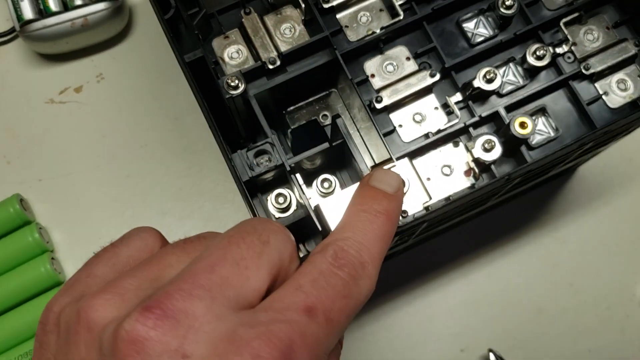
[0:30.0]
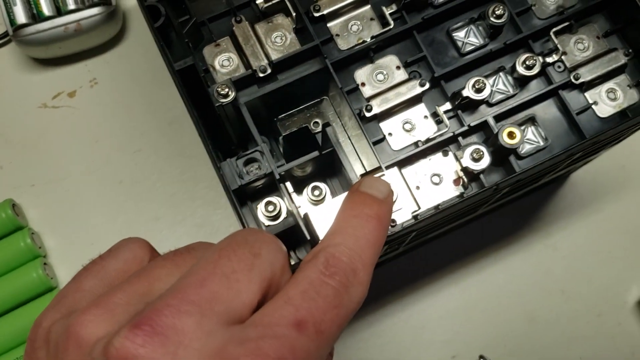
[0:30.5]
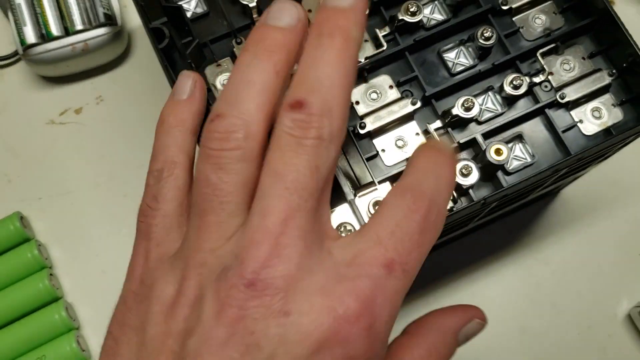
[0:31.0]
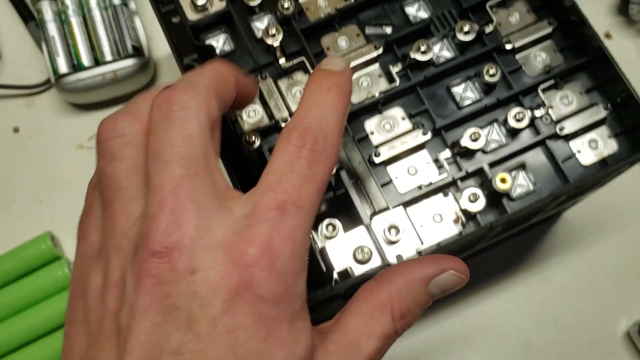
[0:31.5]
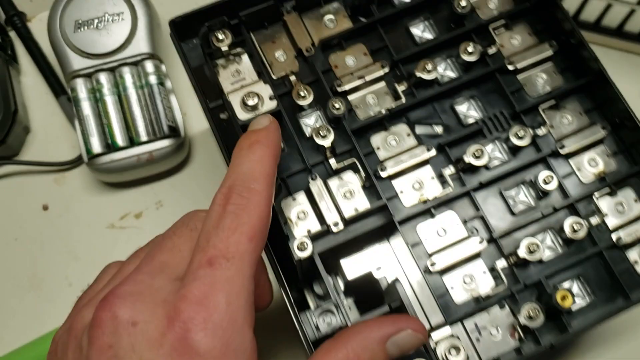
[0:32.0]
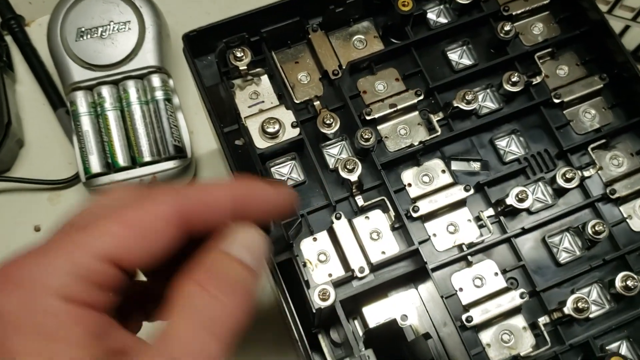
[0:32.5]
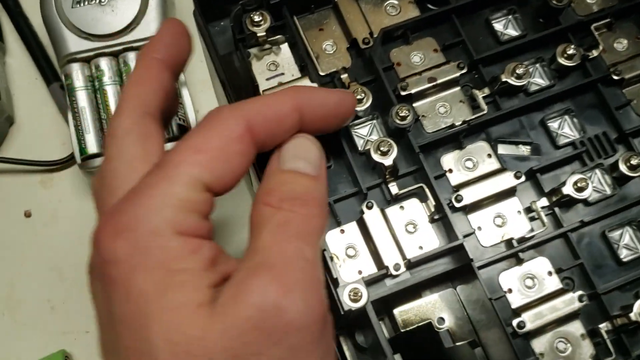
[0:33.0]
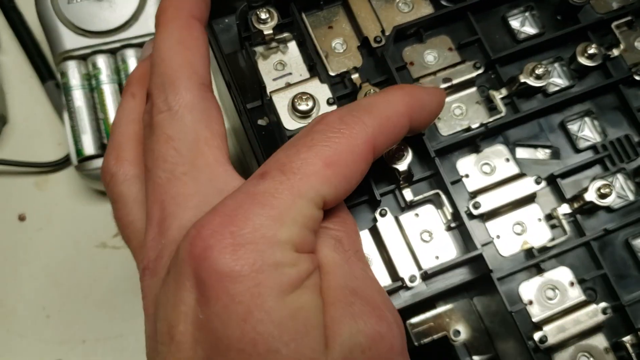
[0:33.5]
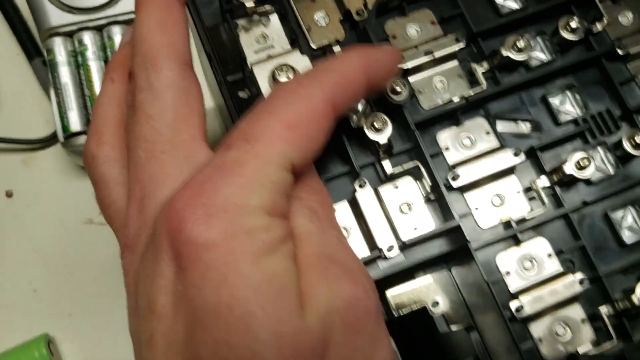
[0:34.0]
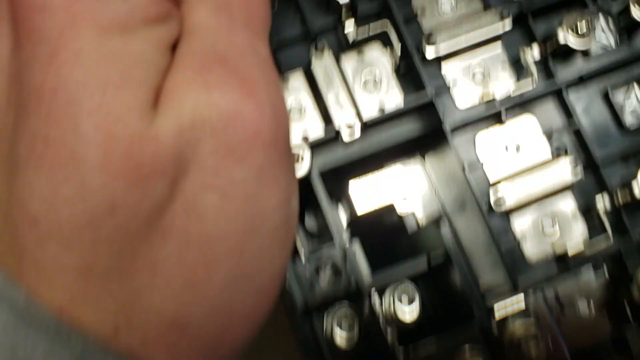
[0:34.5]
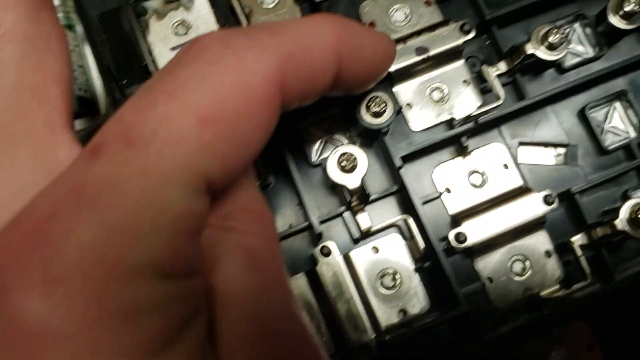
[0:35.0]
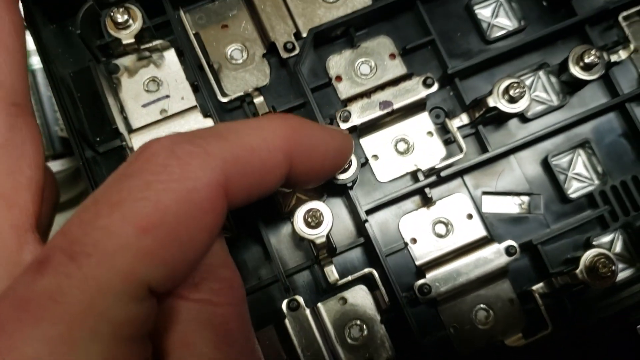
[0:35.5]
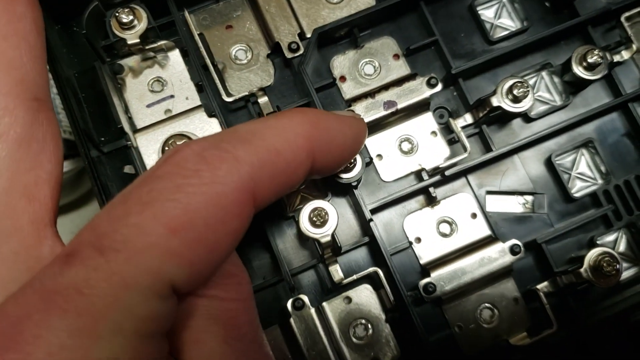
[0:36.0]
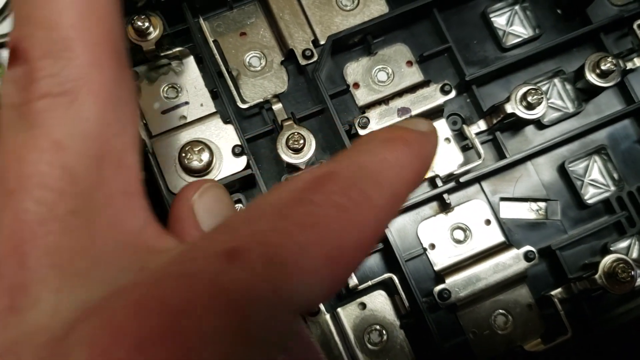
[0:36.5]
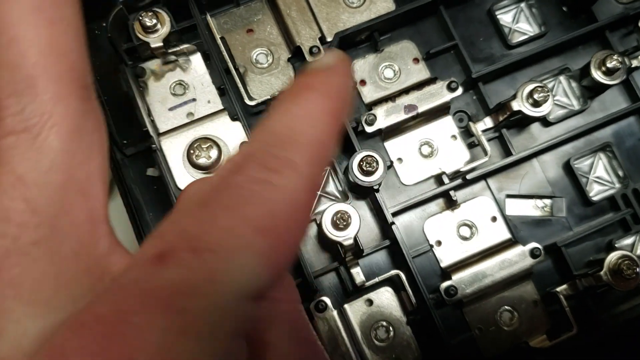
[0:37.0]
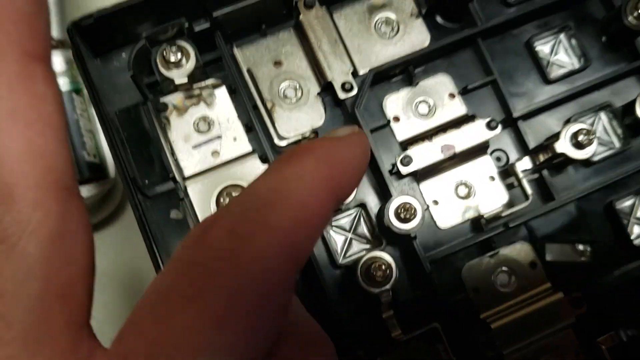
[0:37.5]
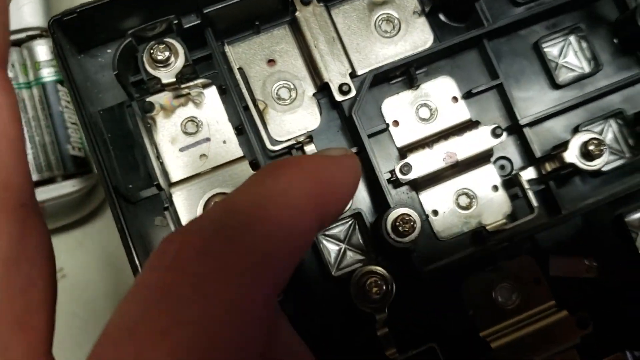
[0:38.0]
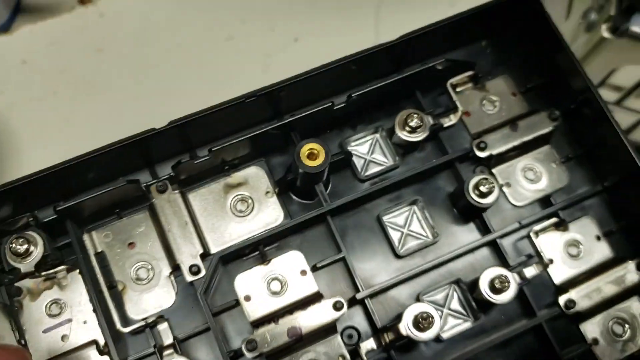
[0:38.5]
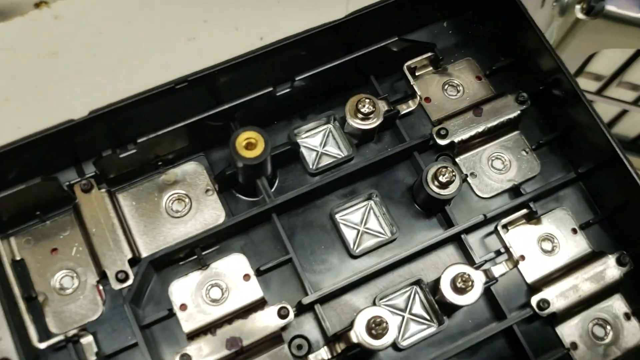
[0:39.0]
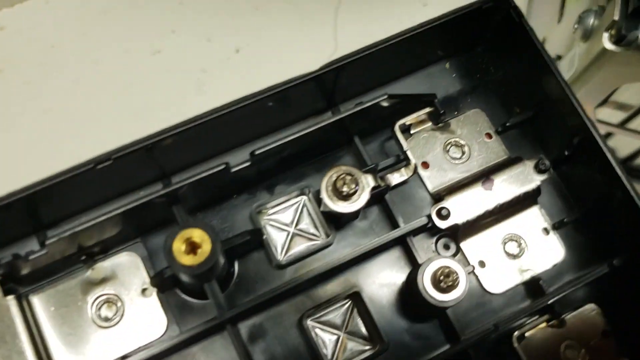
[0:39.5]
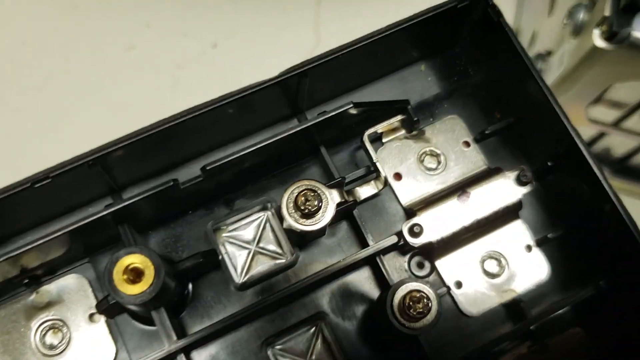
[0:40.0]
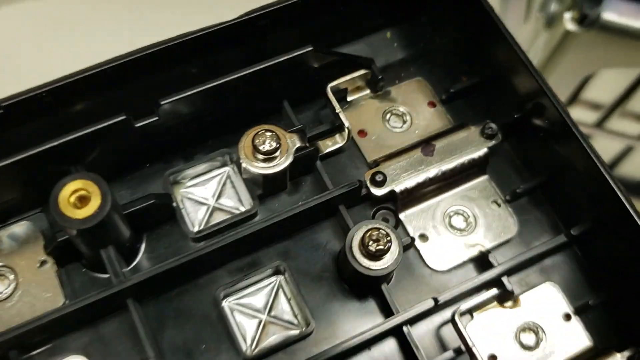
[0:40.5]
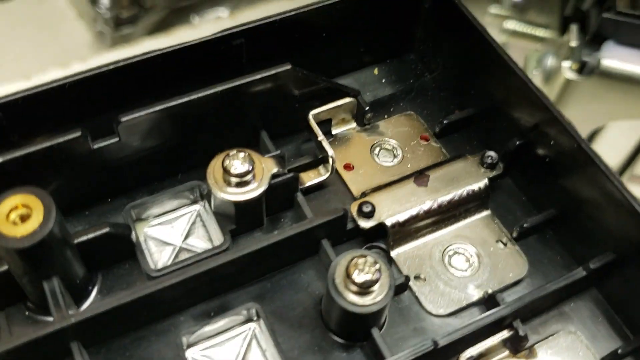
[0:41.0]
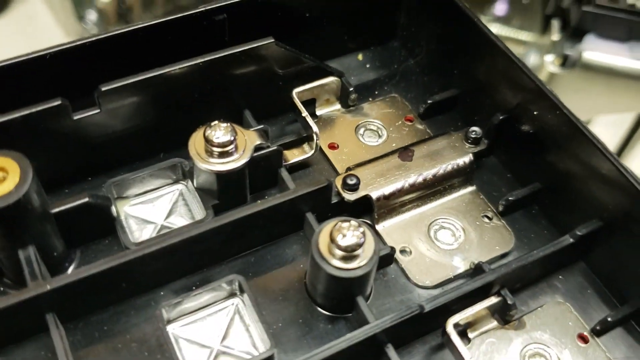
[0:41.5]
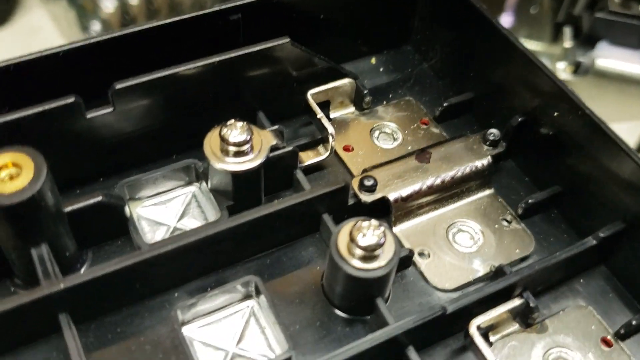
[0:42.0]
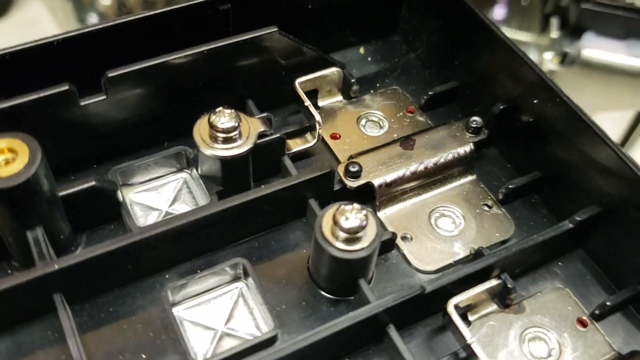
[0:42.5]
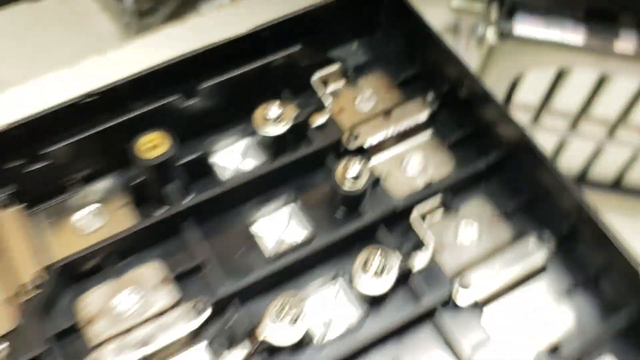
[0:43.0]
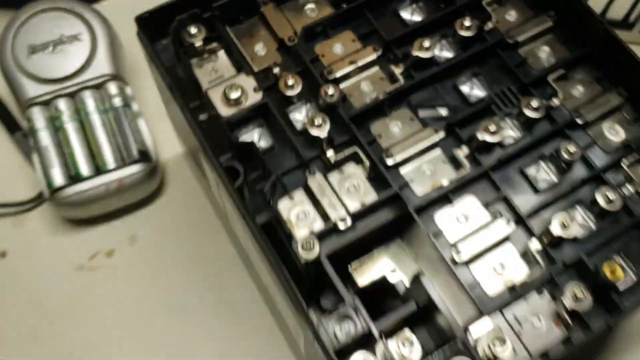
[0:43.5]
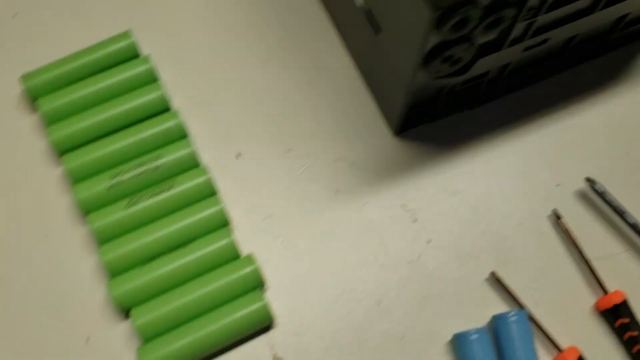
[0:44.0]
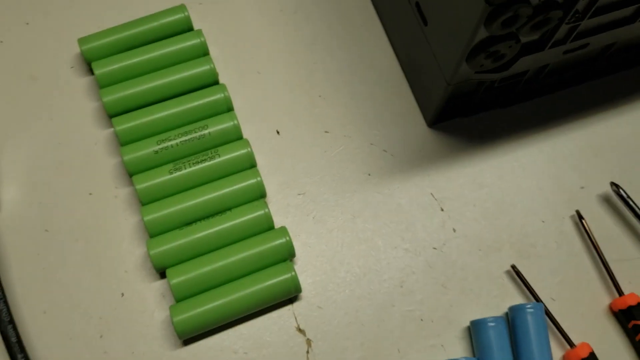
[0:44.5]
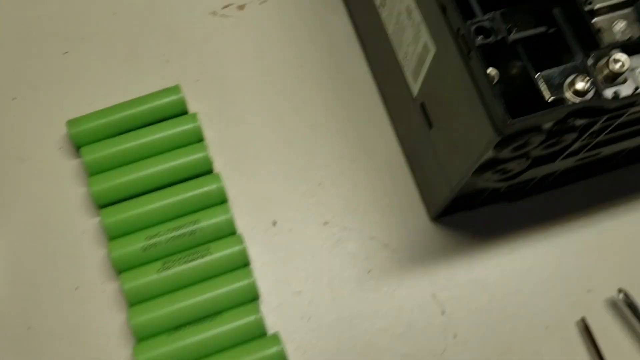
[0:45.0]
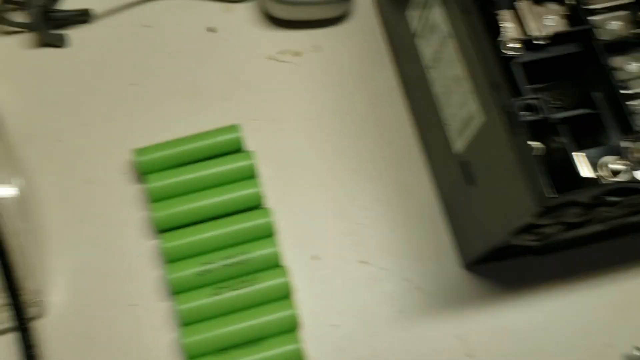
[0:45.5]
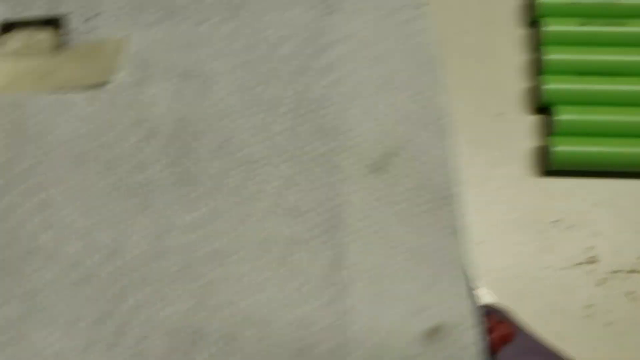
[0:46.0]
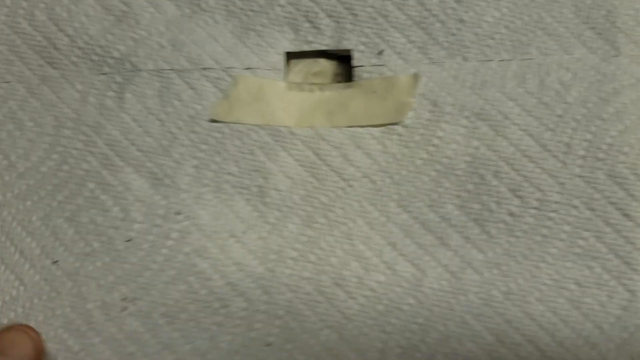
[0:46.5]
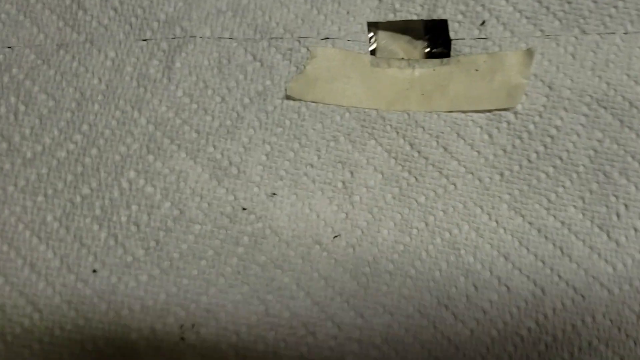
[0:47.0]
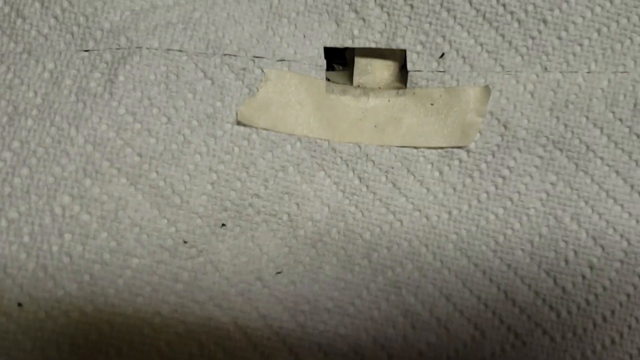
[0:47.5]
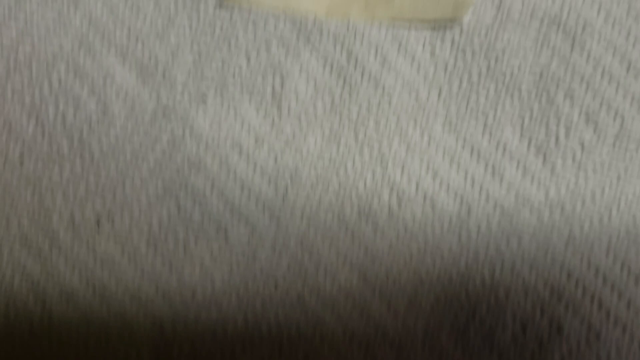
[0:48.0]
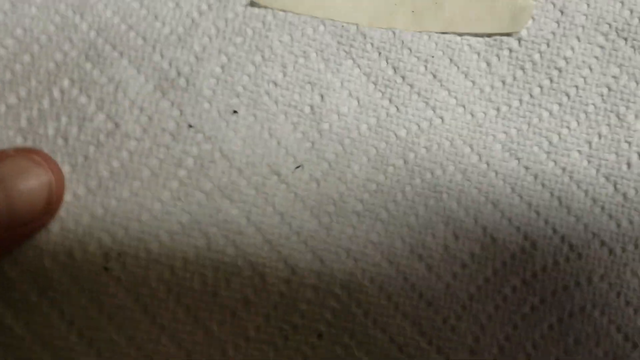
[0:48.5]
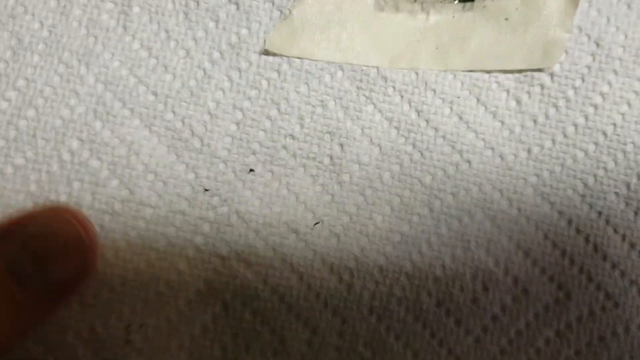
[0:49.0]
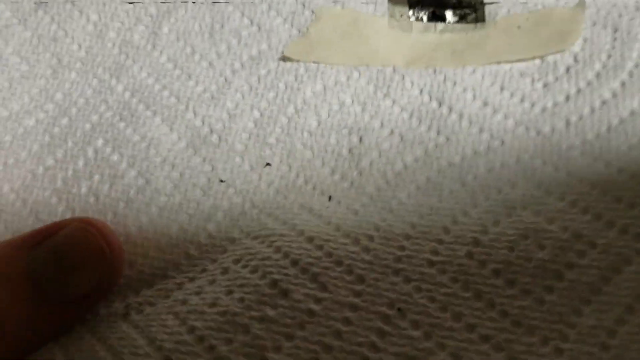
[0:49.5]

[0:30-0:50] The person points at various points on the electrical item, and the camera zooms in really close on different points of it. The person then looks at the thing covered in paper, but the shot ends before what is underneath is revealed. Other equipment is visible in the background.